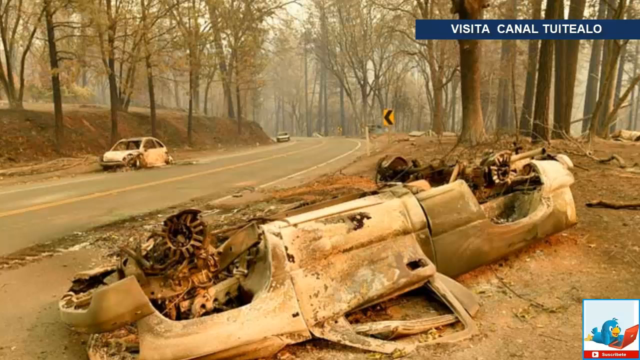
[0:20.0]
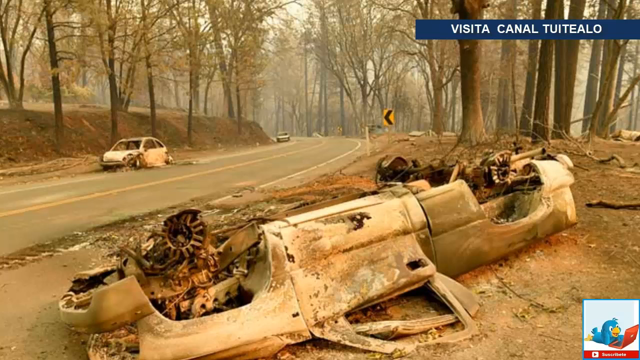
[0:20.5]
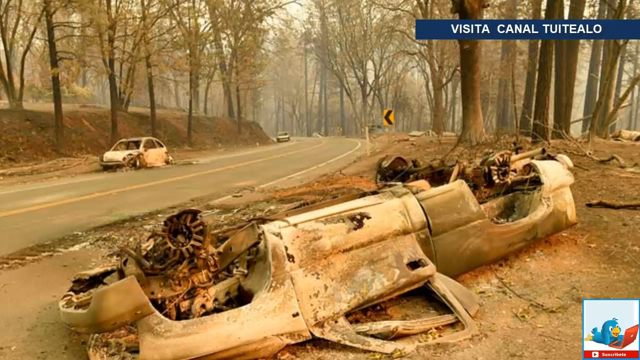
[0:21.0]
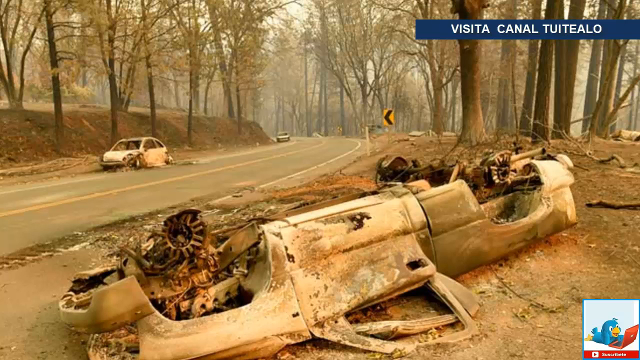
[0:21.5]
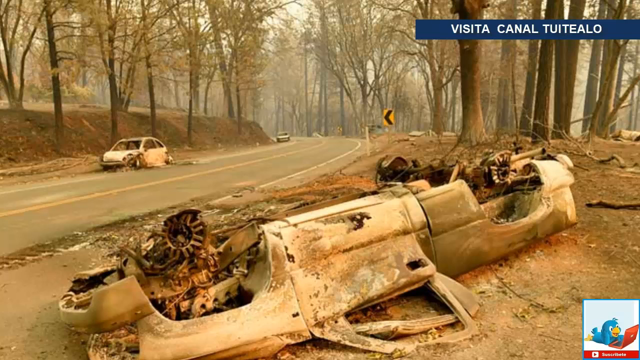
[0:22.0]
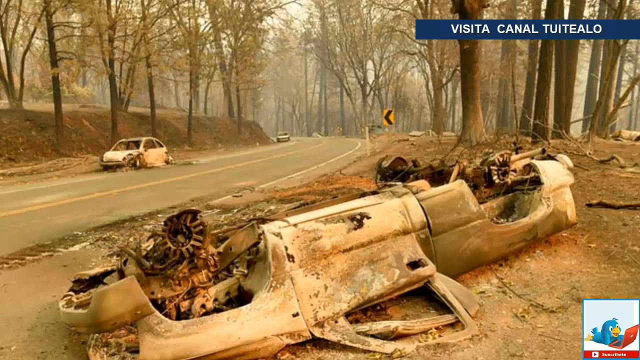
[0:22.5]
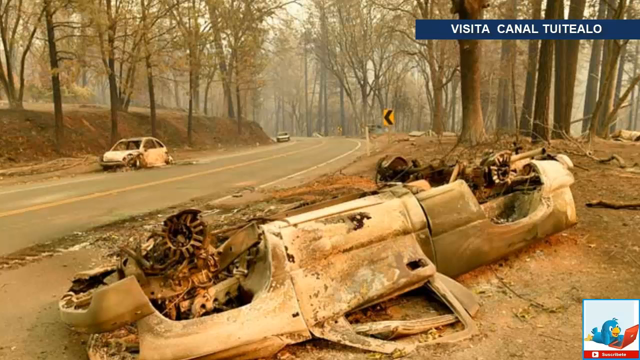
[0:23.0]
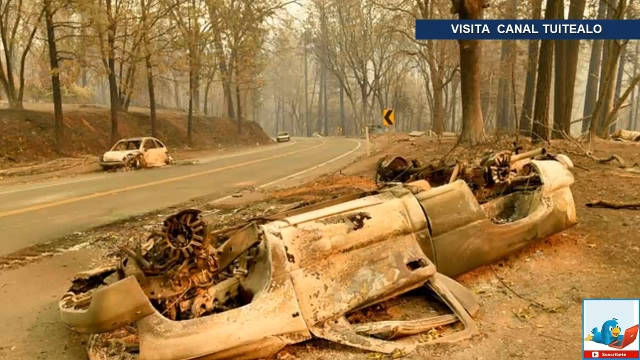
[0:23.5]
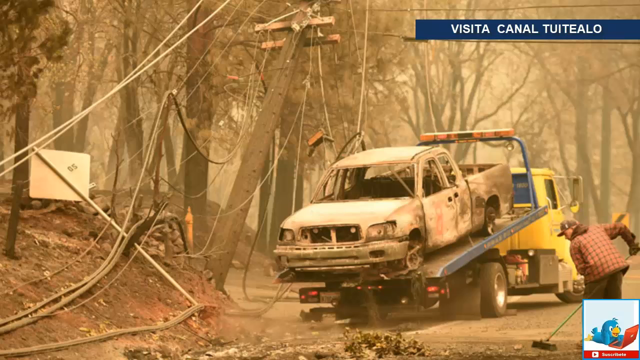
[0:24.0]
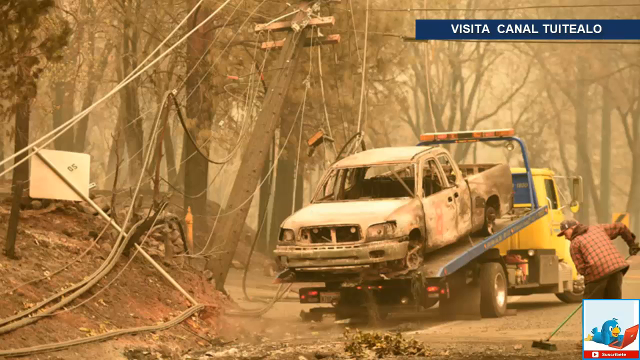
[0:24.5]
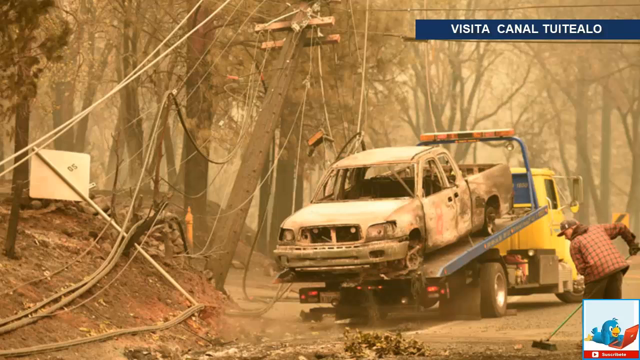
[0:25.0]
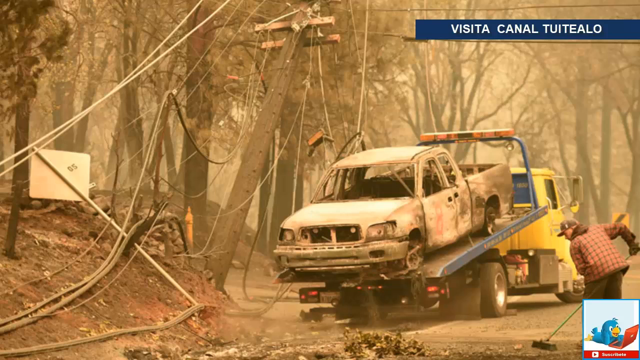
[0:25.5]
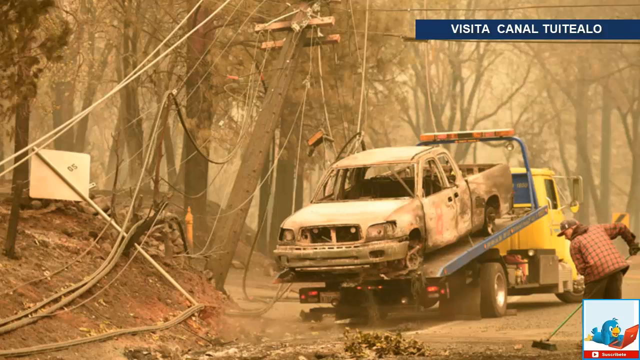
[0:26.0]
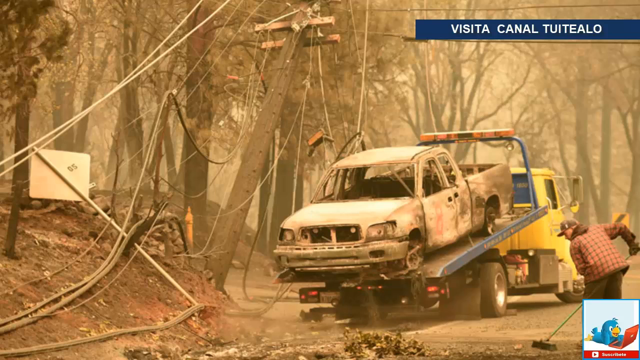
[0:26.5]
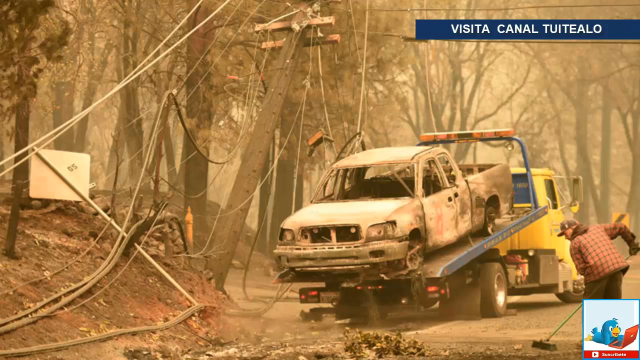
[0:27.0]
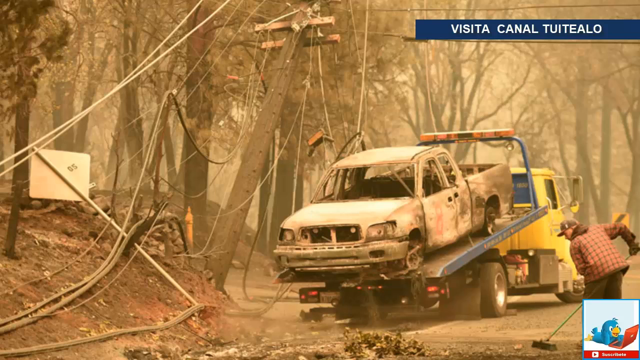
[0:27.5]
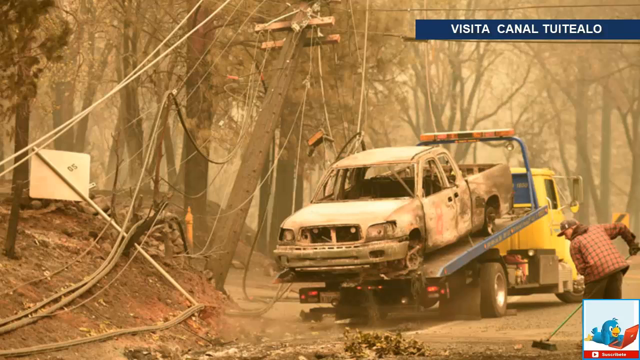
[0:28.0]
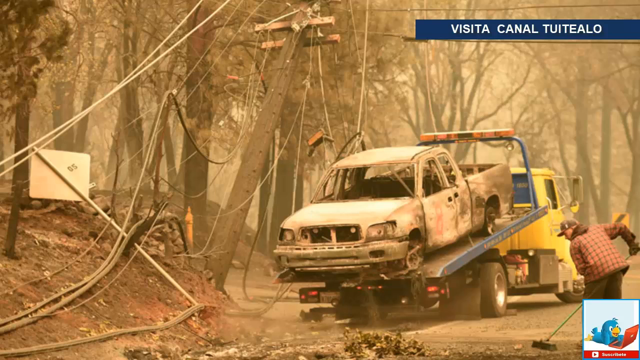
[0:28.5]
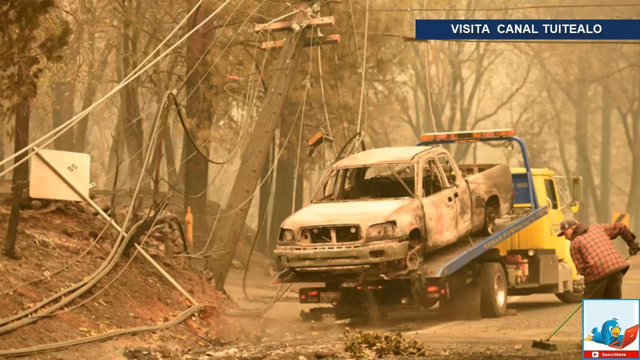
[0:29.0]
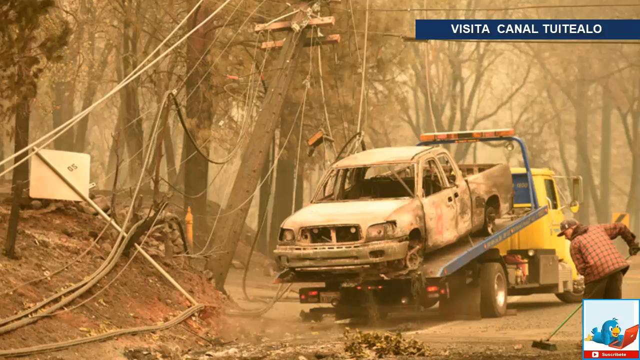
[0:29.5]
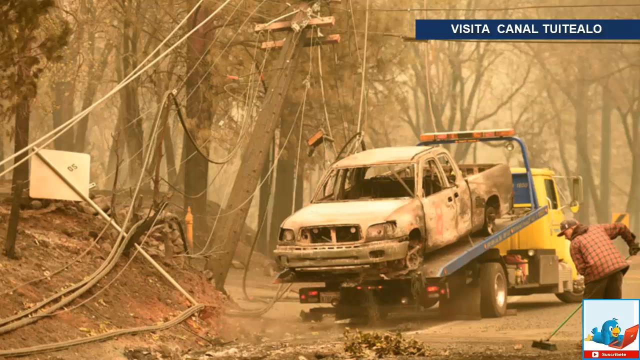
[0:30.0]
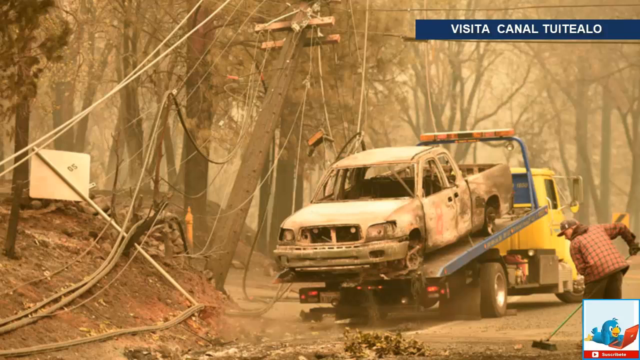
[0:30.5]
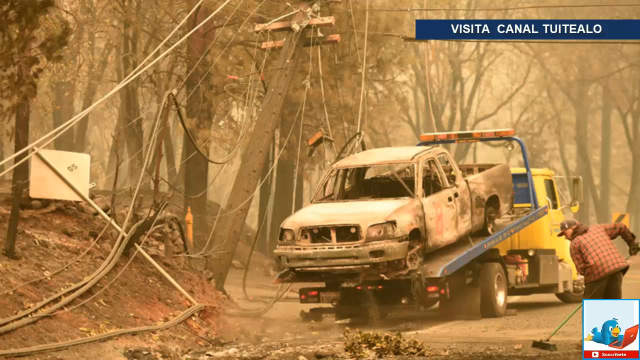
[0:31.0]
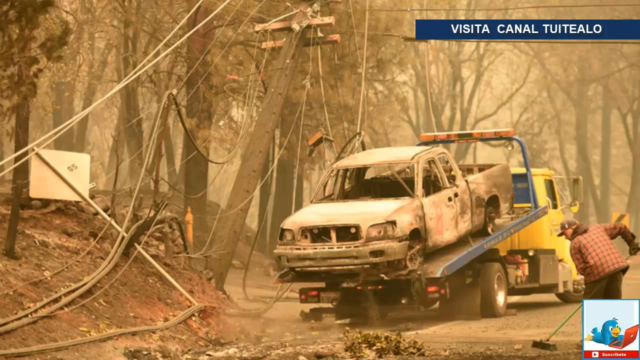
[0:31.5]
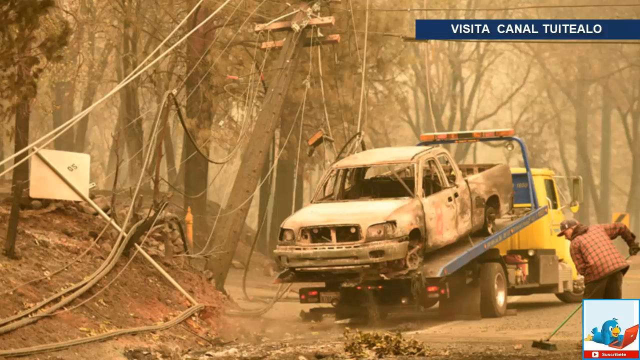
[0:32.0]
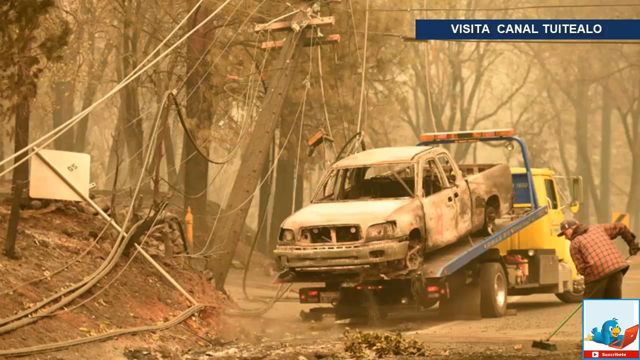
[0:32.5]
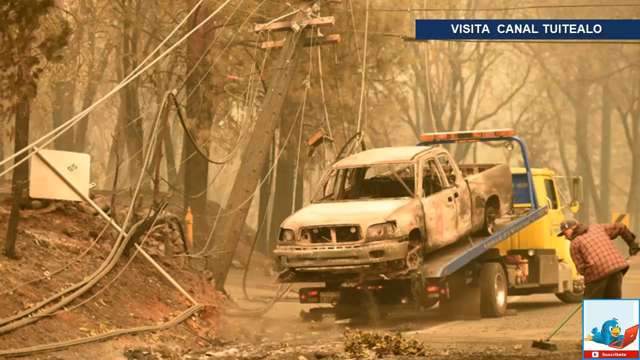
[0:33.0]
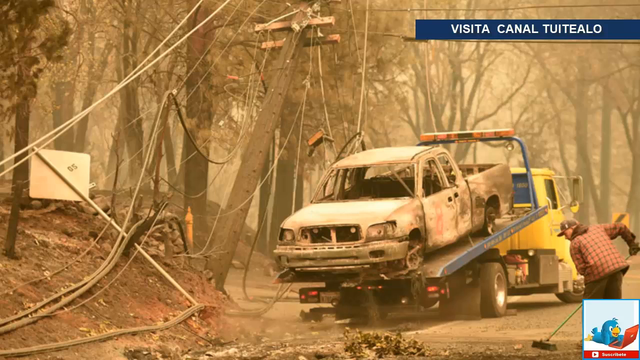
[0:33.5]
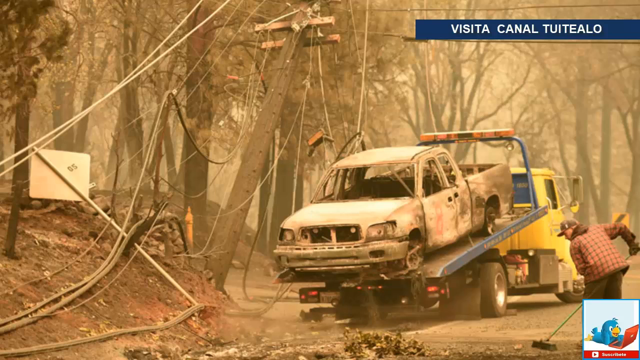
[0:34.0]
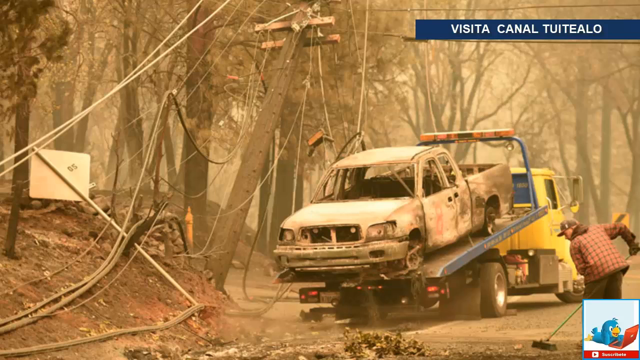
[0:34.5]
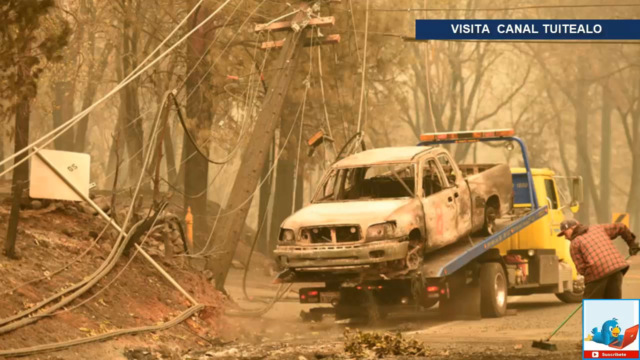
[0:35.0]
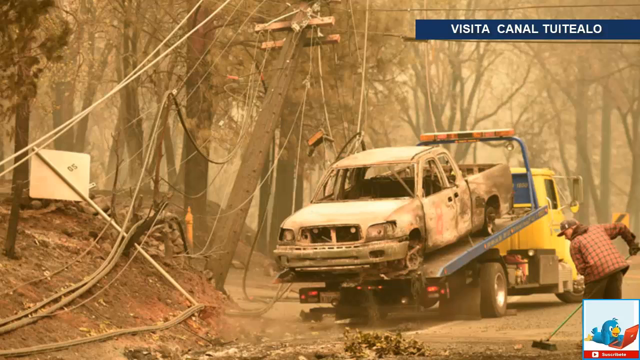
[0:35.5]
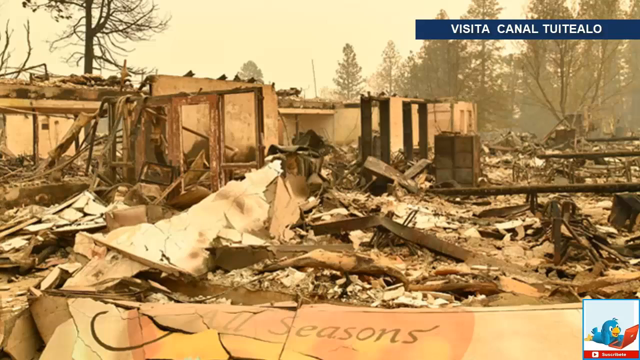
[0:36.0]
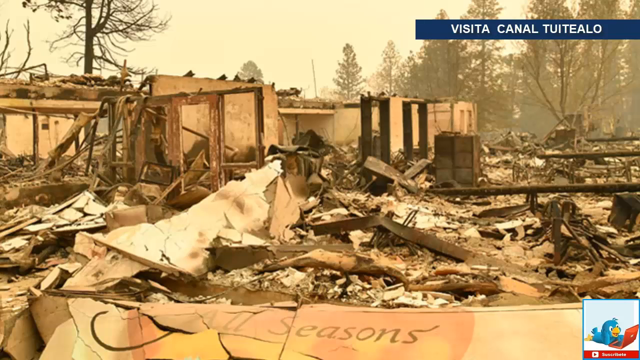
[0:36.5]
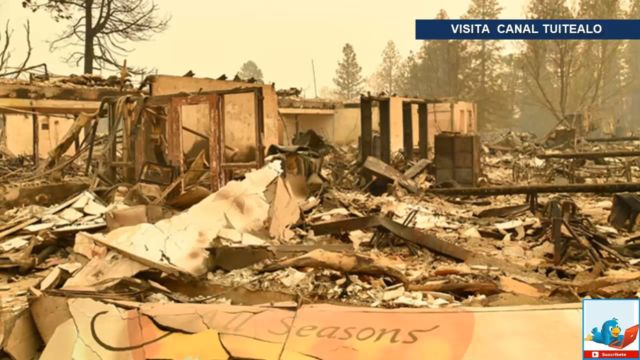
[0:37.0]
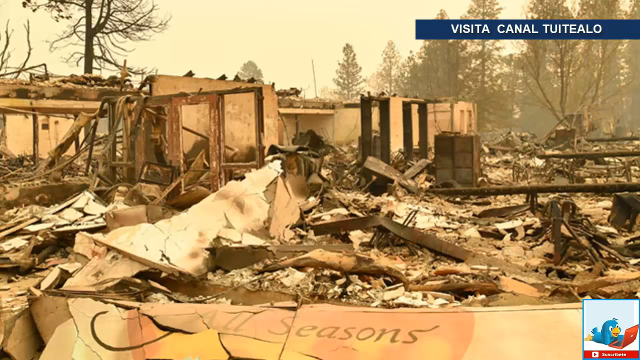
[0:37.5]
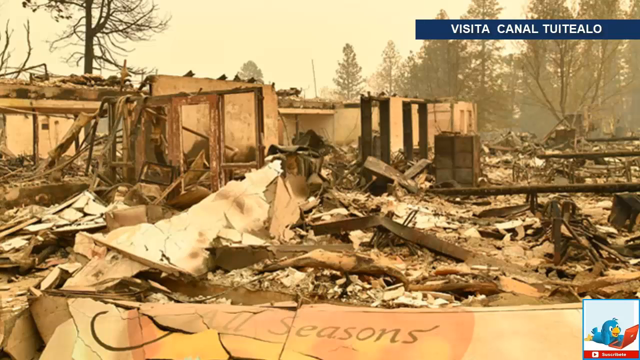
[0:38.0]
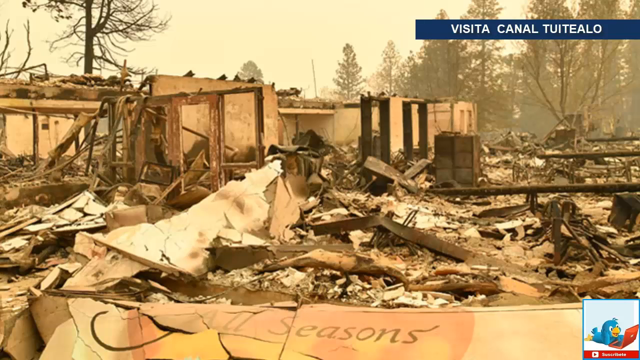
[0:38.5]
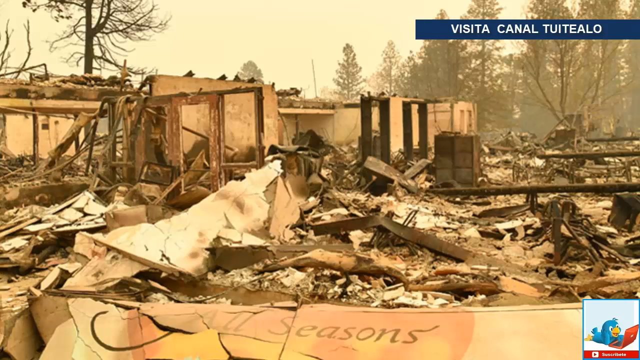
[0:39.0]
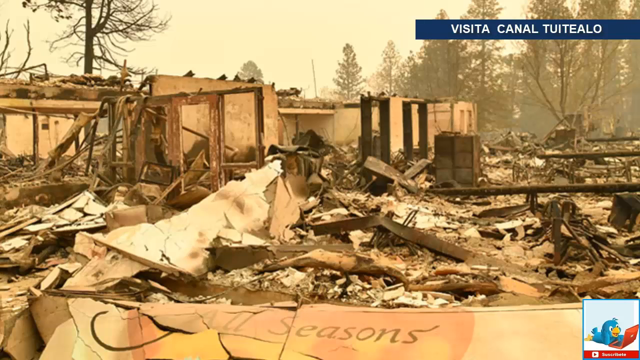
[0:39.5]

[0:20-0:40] Three cars lie on the side of the road; it is unclear whether one of them is moving. They seem to have been in accidents and look like very old cars, as they are rusty. A man puts one car onto a tow truck, towing it out of the area. Rusty trucks and rusty truck canopies are there, and a person is cleaning the yard. The setting is a forest with a corner where cars turn, and it seems accidents often happen on this road. The forest is dry and looks like it has gone through dry times with no rain. A sign ahead indicates a sharp curve ahead.